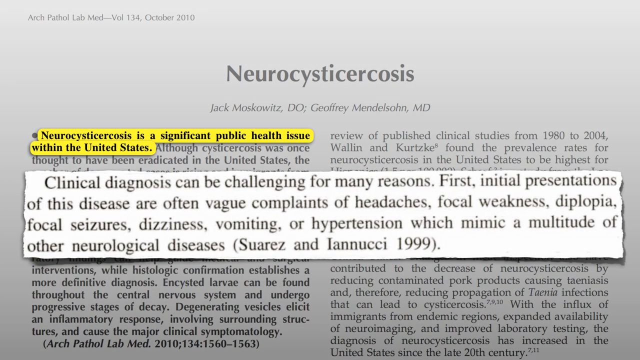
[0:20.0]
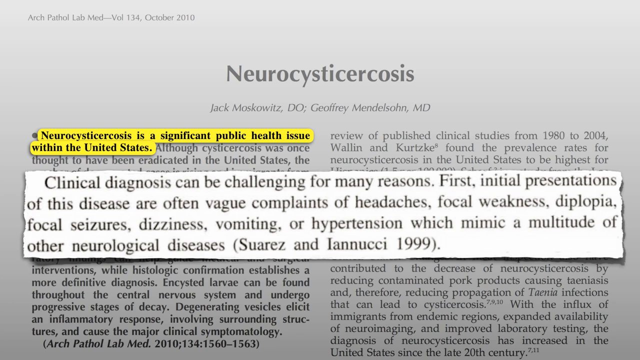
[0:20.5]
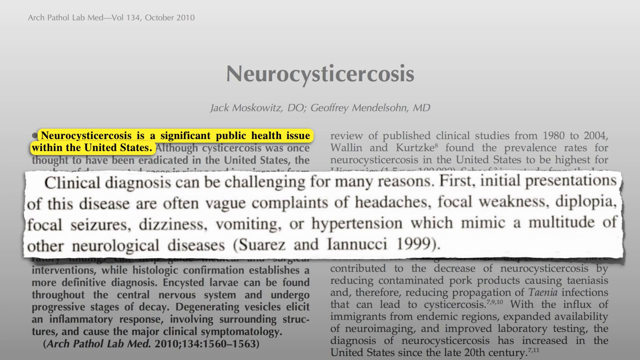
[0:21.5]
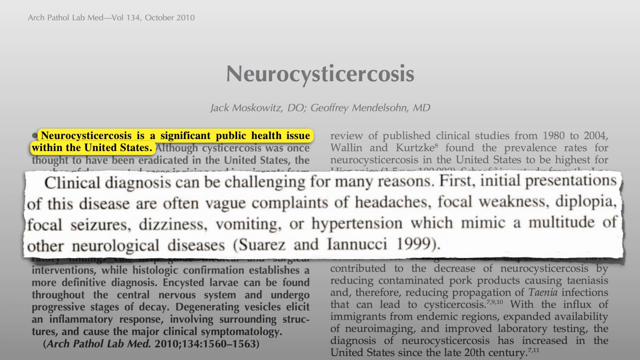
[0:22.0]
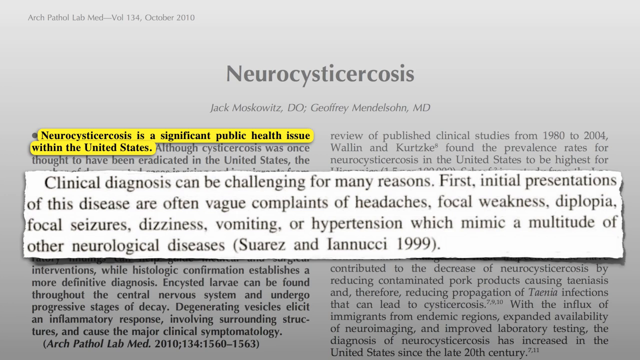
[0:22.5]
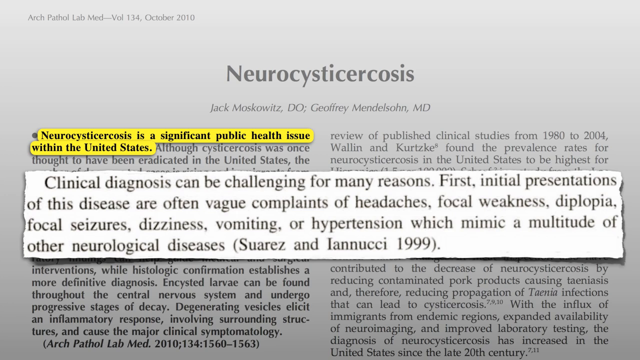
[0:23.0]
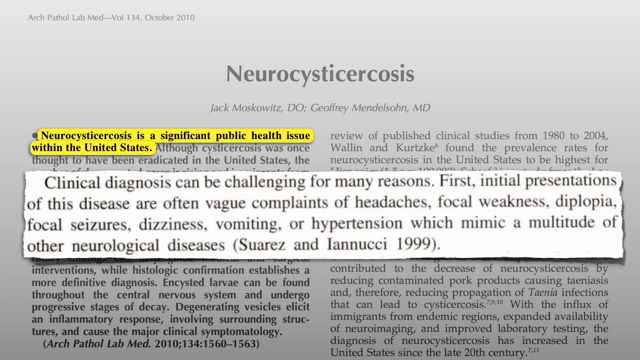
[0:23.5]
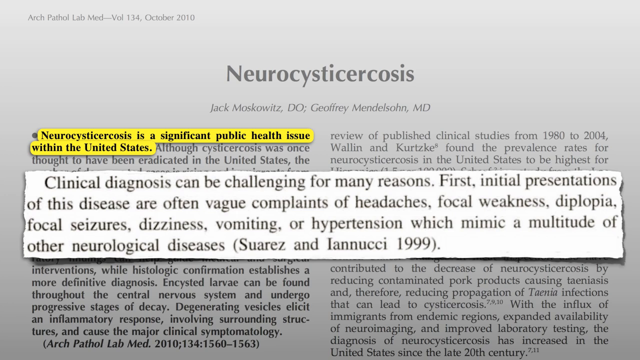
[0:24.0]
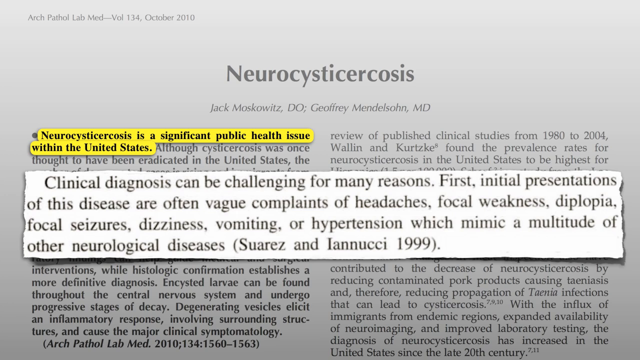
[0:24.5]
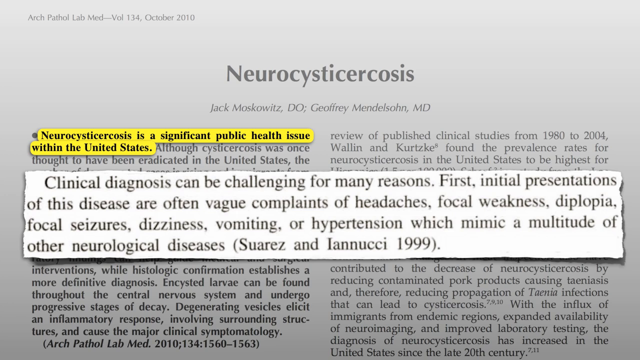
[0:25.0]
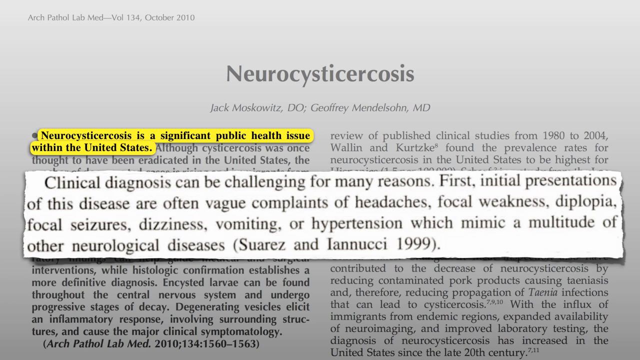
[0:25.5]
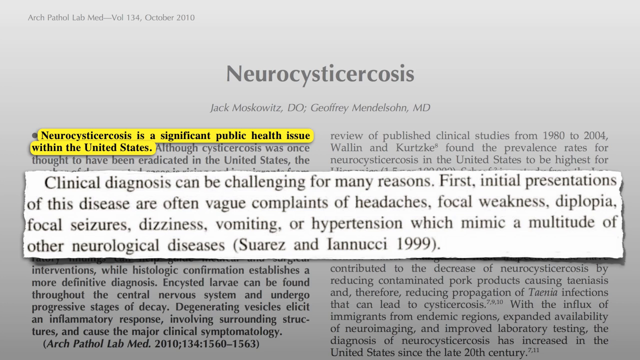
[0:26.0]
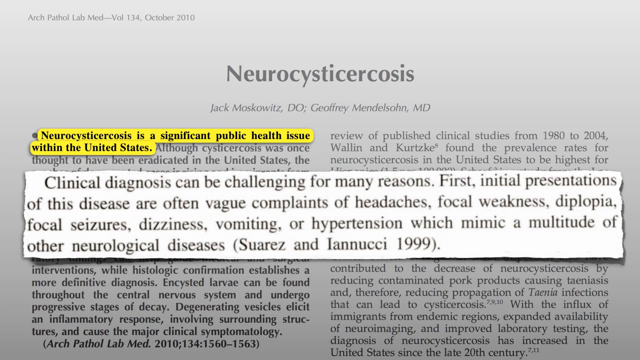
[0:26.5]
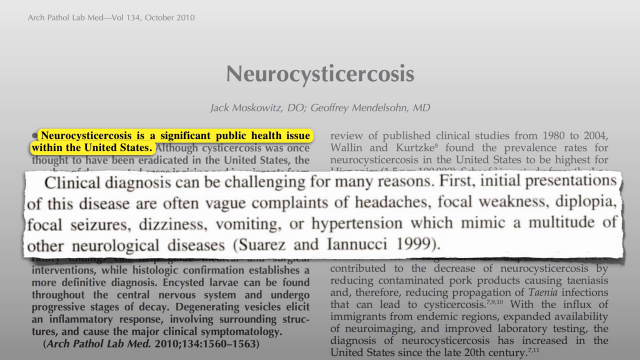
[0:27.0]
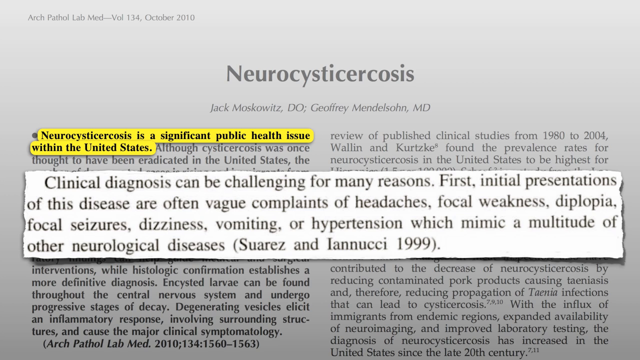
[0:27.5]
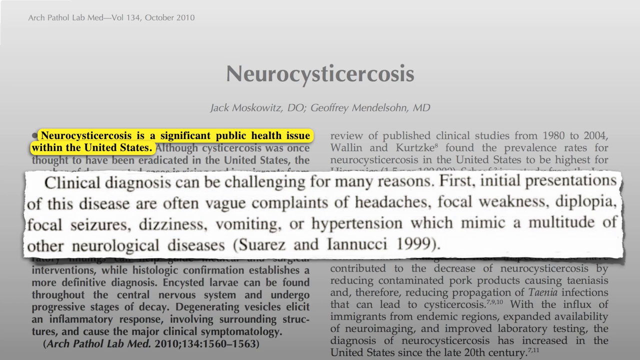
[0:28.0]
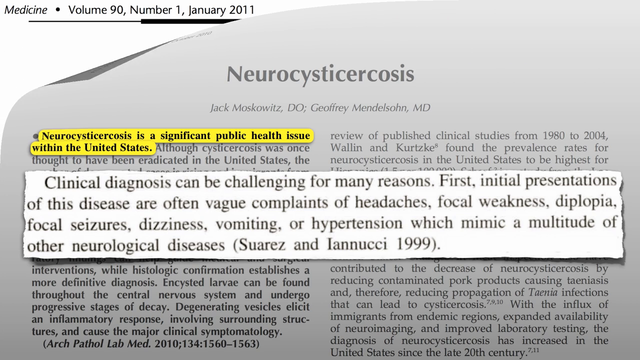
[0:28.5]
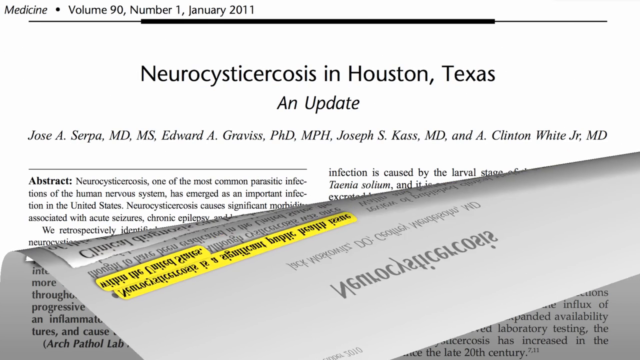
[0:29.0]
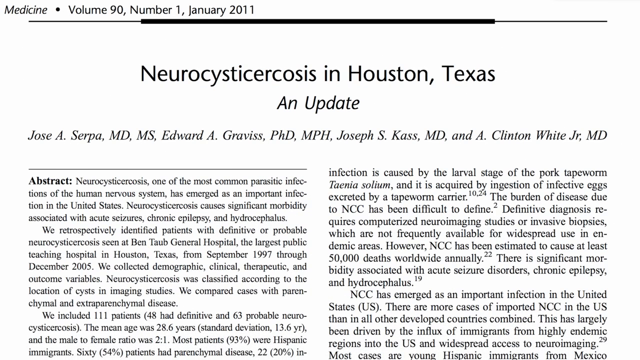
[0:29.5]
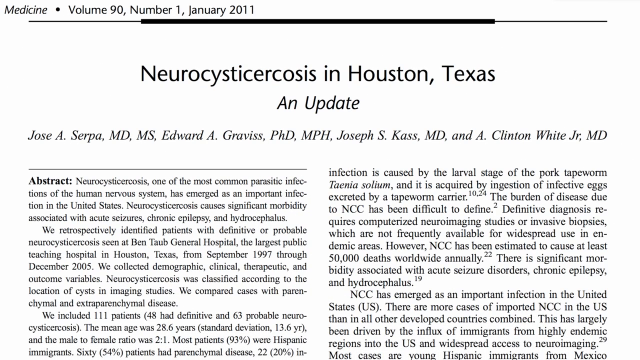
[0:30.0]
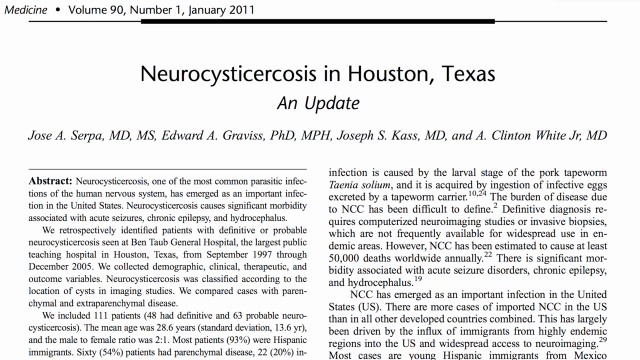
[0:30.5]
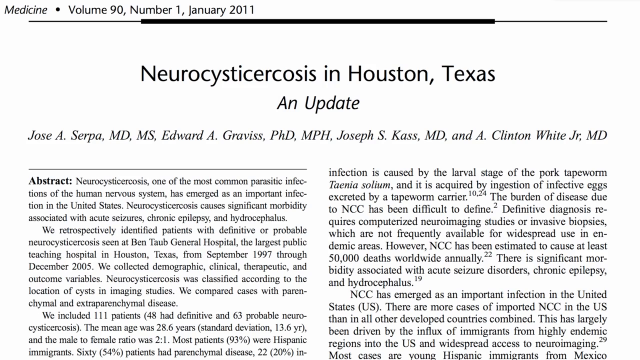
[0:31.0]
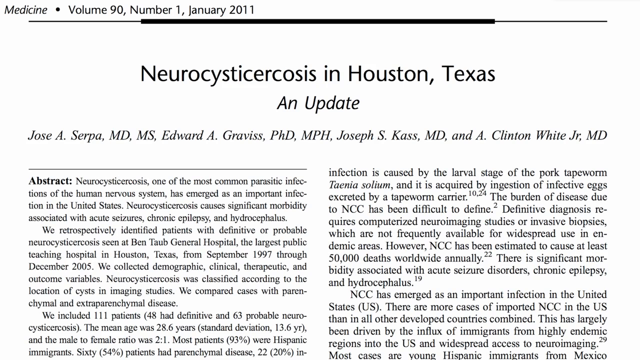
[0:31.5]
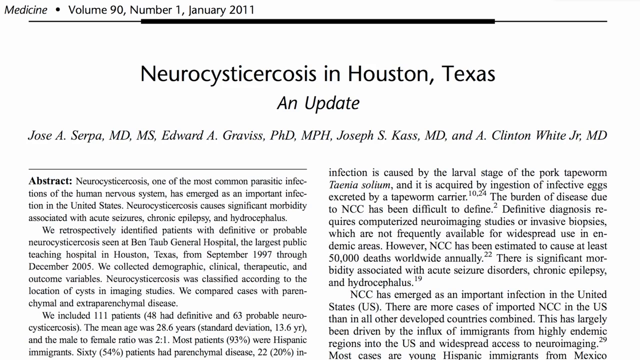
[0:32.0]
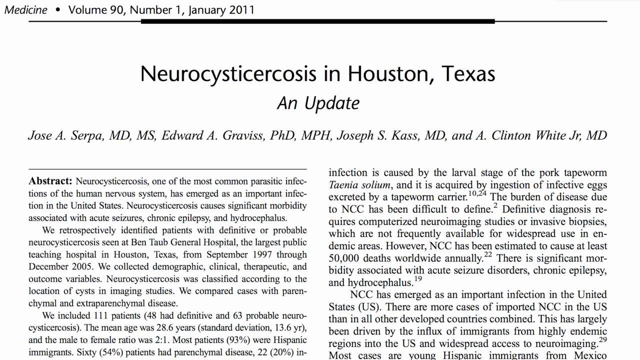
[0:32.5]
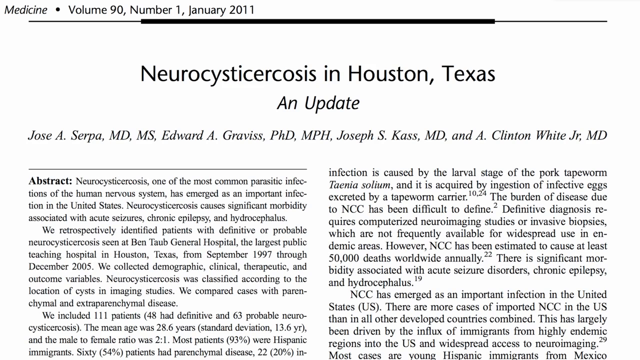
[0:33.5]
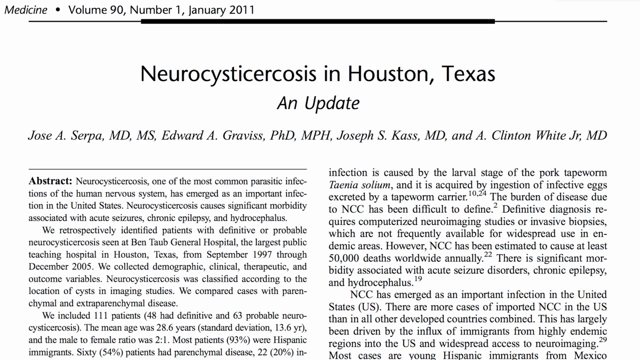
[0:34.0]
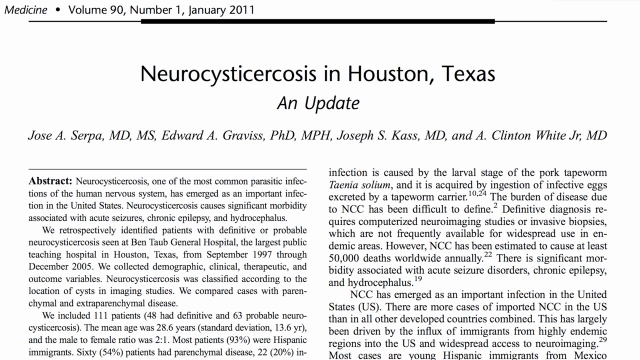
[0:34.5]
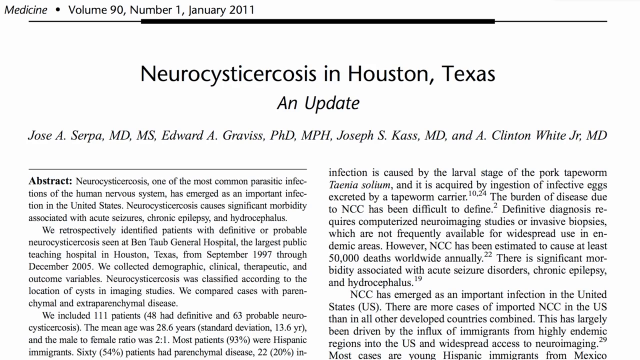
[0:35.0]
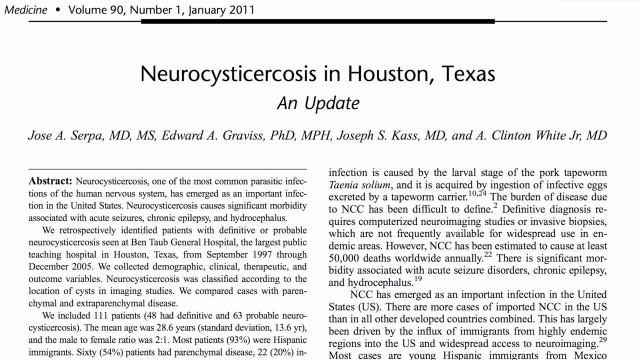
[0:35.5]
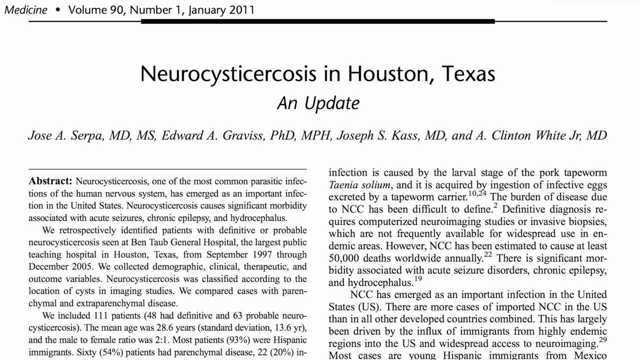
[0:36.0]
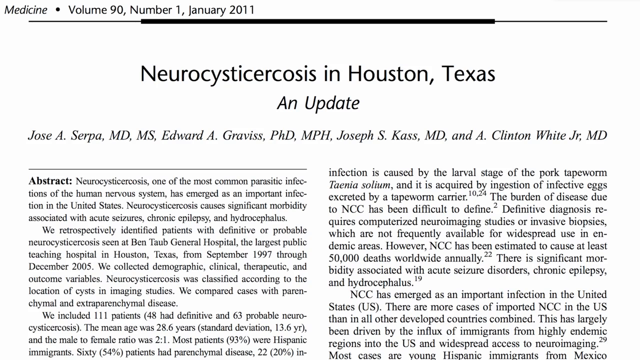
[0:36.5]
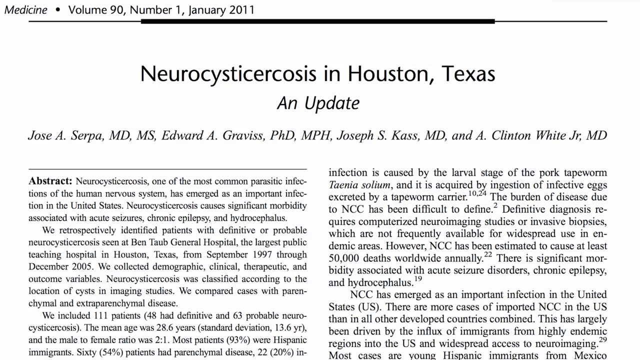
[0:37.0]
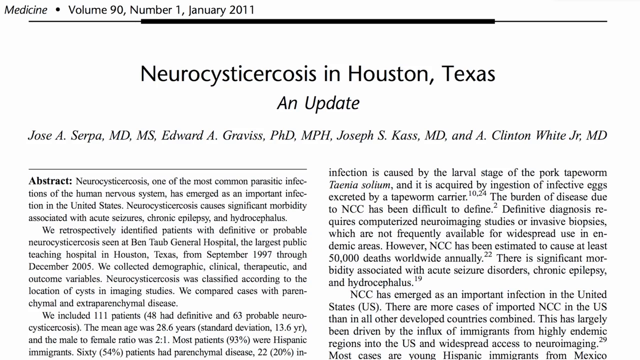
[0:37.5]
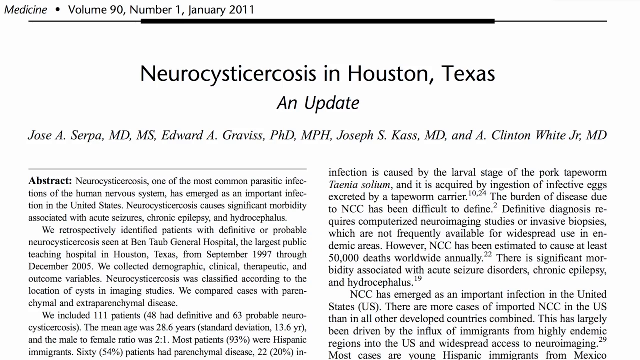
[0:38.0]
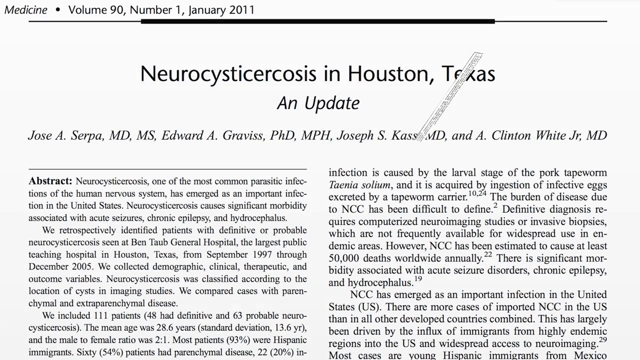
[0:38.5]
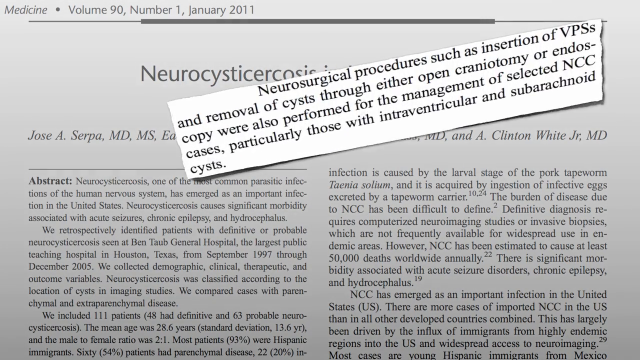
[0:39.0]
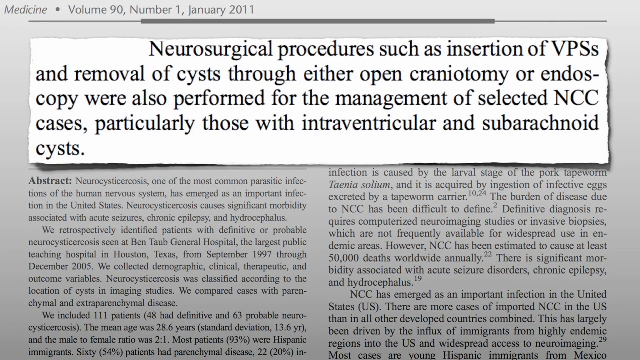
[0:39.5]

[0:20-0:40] The main points of the neurocysticerosis paper are shown, followed by a second paper on the same subject focusing on the disease in Houston, Texas. It was published in the journal Medicine, Volume 90, Number 1, dated January 2011, is an update on an earlier paper, and has four authors: Jose Serpa, Edward Graviss, Joseph Kass and A. Clinton White. It concerns patients who presented with the disease at the Ben Taub General Hospital in Houston from 1997 to 2005. The paper states that infection is caused by the larval stage of the pork tapeworm and is acquired by eating infected eggs, that definitive diagnosis requires computerized neuroimaging studies or invasive biopsies, and that an estimated 50,000 deaths occur worldwide from the condition, largely due to acute seizures, chronic epilepsy or hydrocephalus.